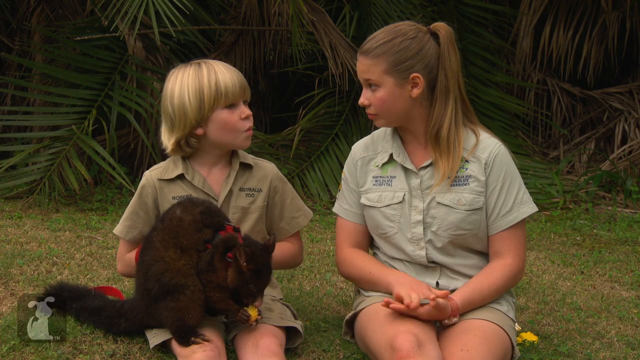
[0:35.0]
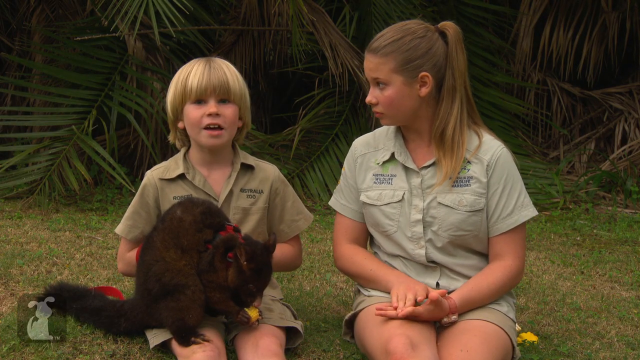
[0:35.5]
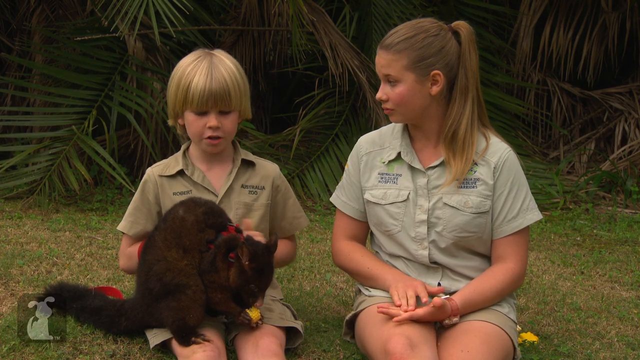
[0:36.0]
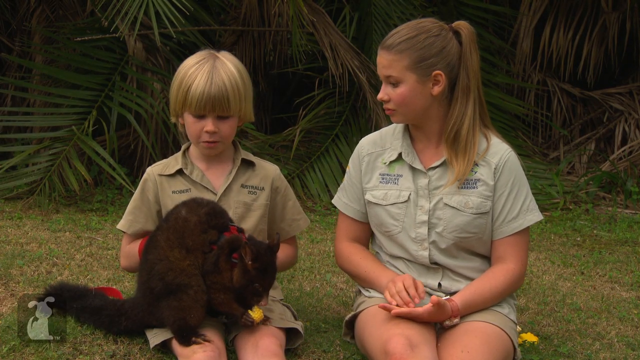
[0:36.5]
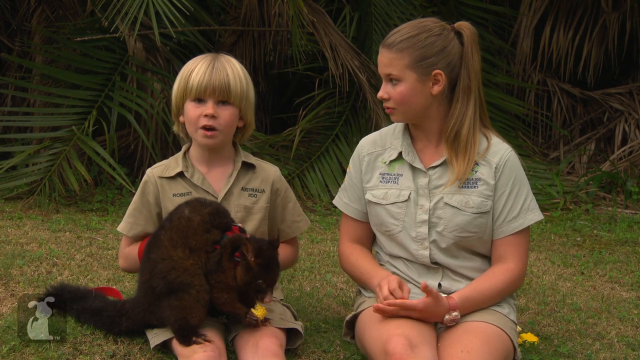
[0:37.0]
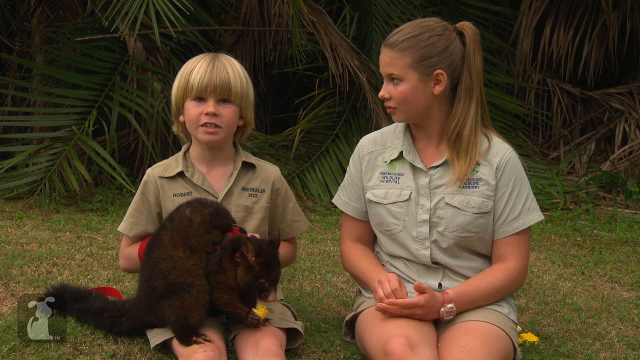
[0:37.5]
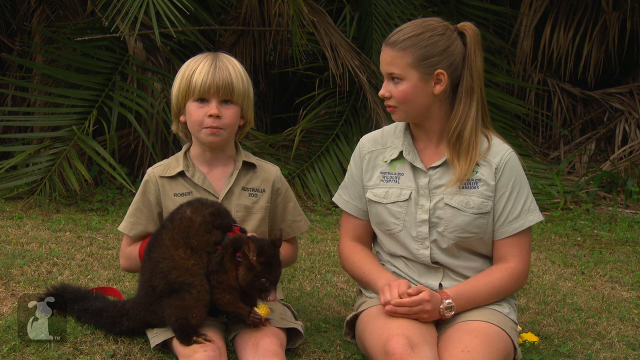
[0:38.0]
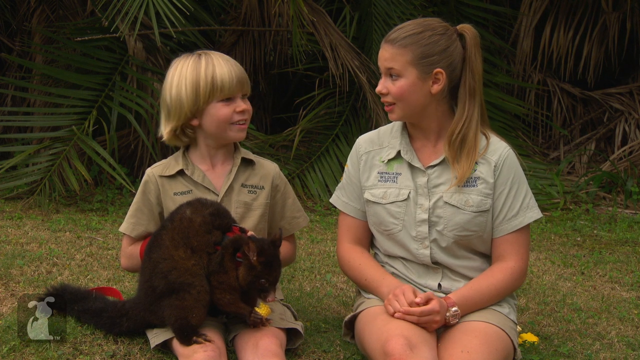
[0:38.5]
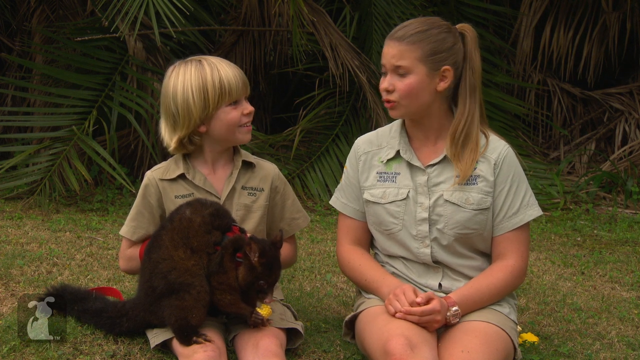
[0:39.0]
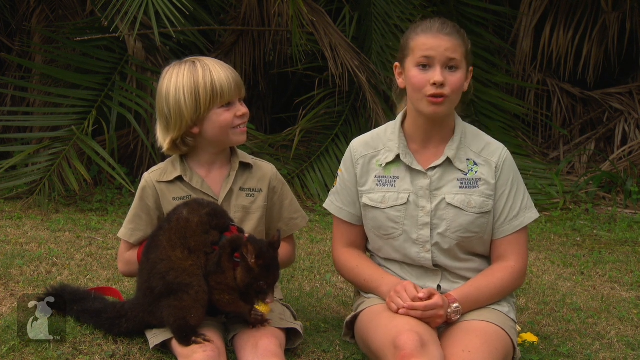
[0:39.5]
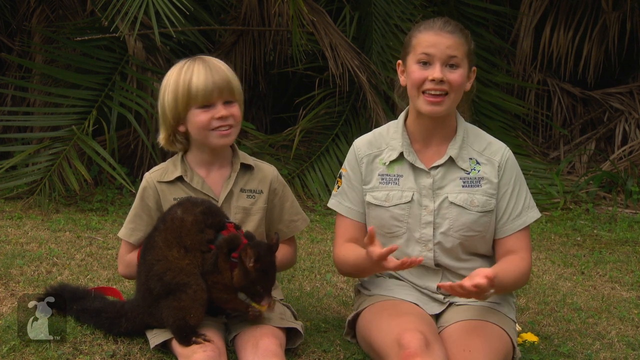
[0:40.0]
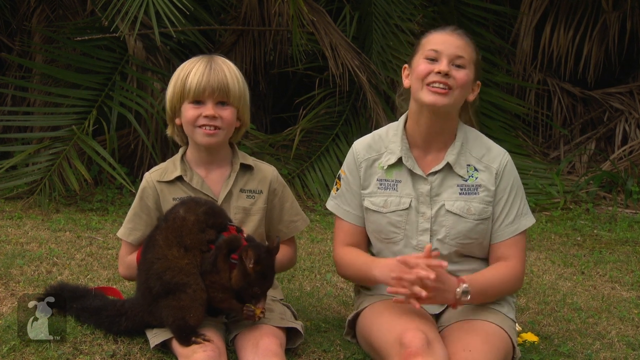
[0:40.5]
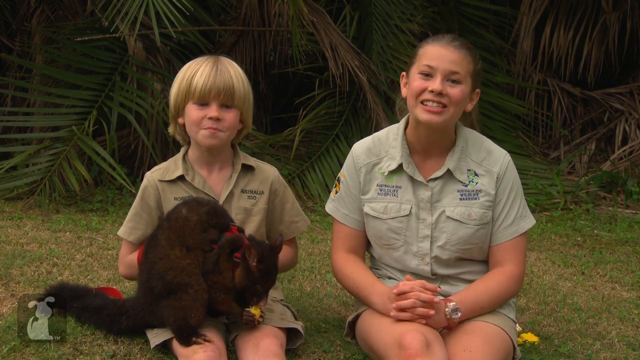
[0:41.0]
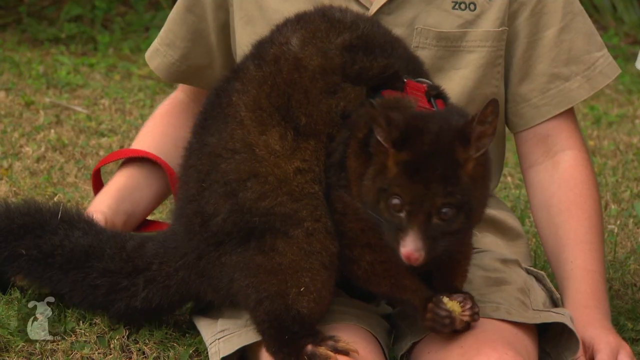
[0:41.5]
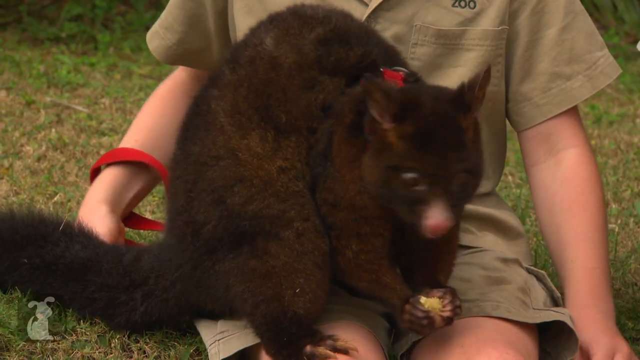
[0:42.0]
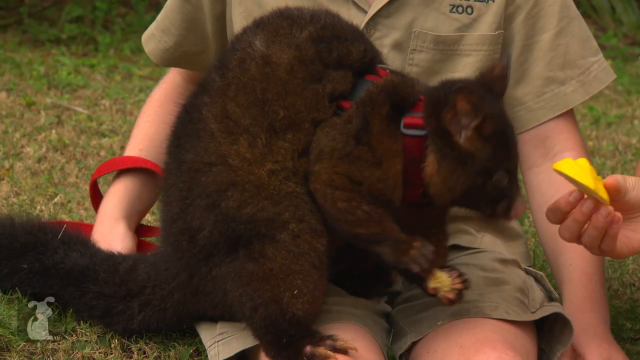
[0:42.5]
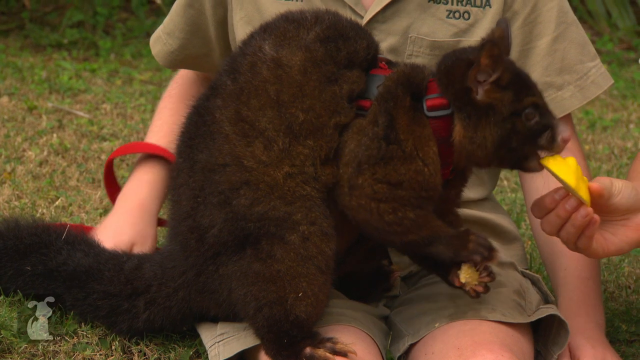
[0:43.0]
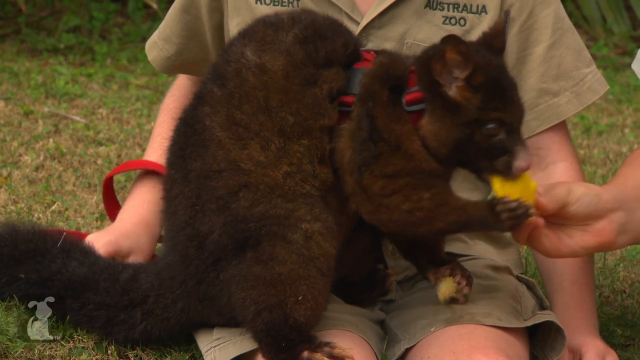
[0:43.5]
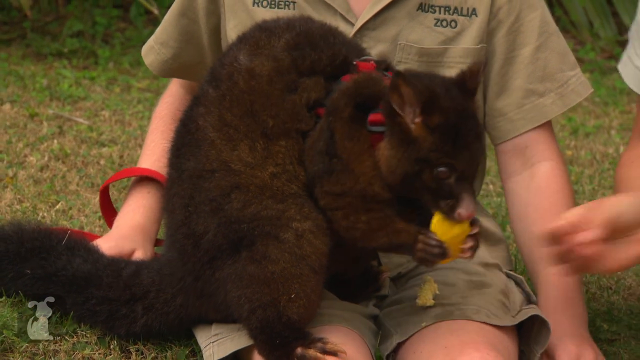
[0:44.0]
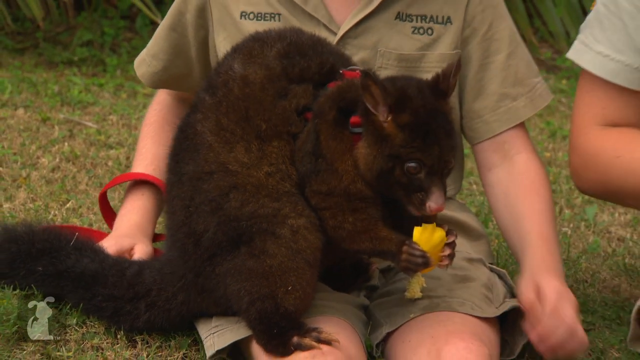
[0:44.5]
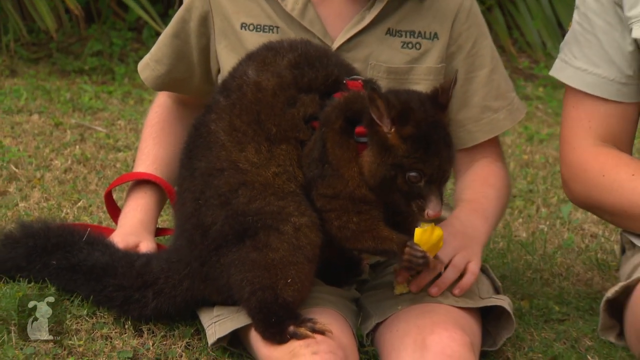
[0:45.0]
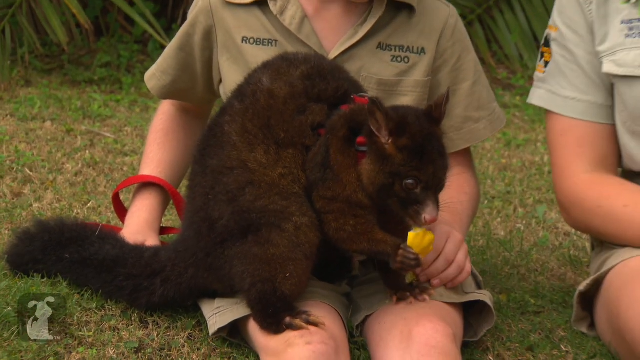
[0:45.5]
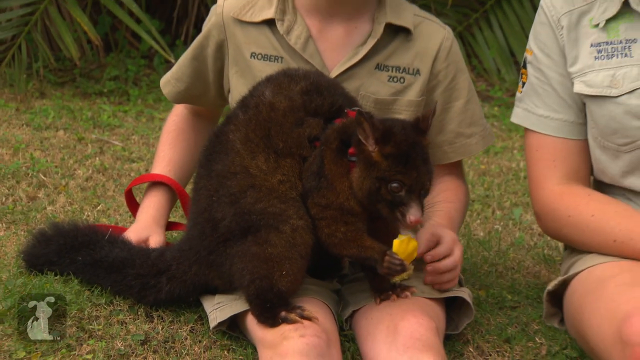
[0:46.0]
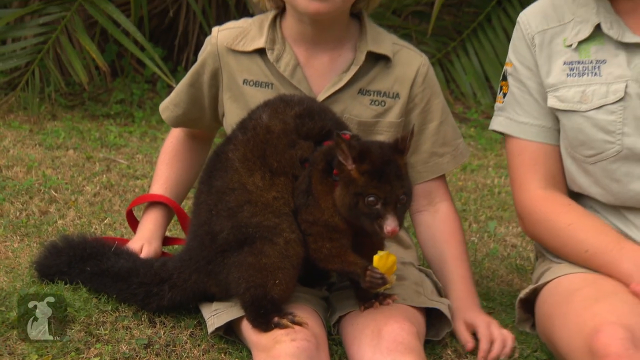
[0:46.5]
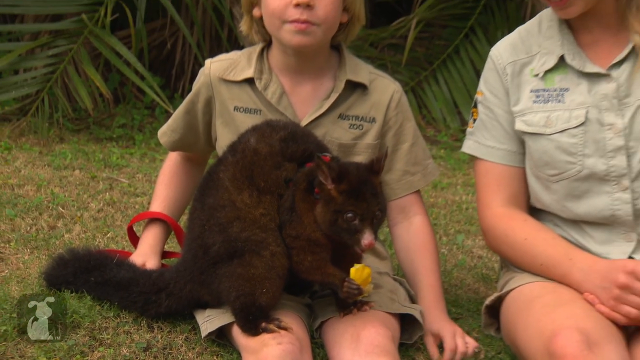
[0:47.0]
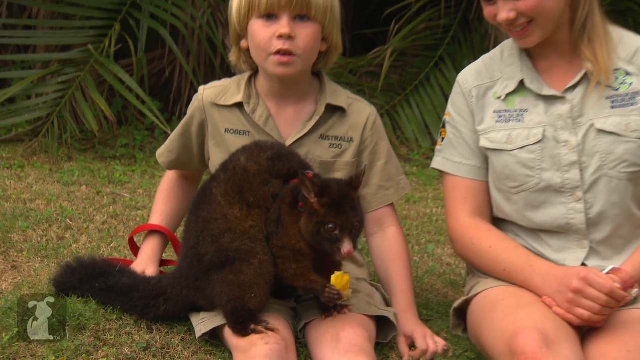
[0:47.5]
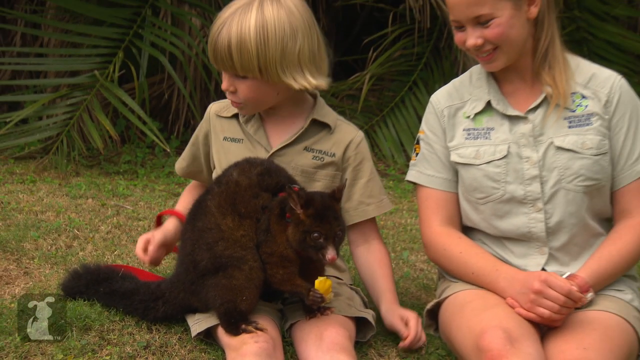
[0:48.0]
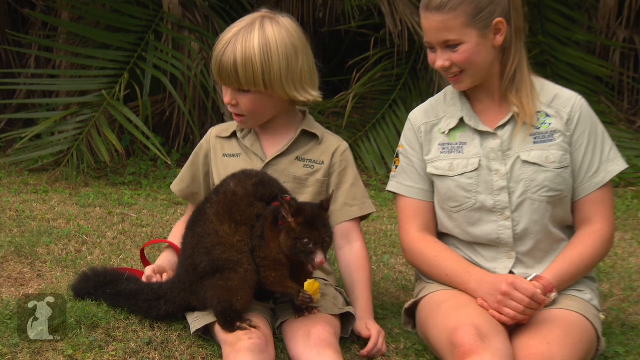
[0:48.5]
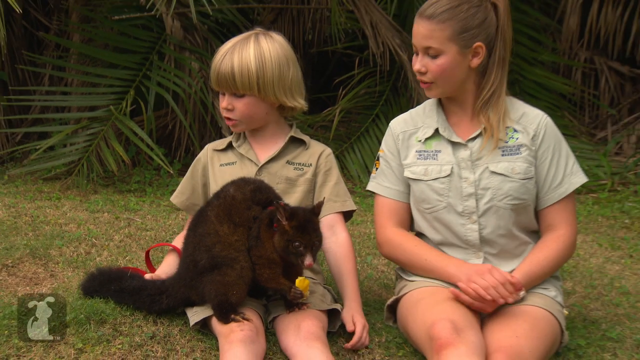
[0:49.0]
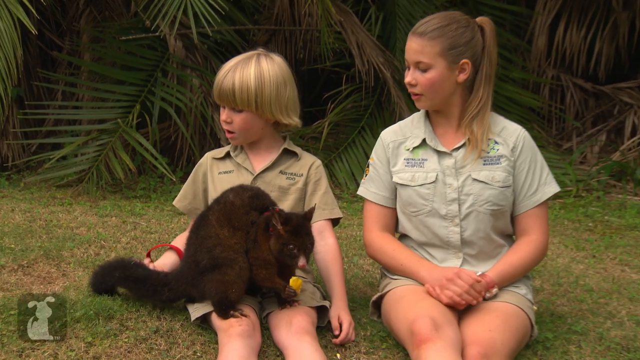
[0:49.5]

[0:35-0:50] The young boy and young girl hold the leashed possum as it eats a piece of corn. Partway through, the girl hands the possum a different piece of food; it drops what is left of the corn and begins eating the new food, which appears to be a fruit, possibly a mango. The two talk about the animal to the camera. On the left is an icon of an animal silhouette, and on the right an icon with a pink backdrop and a cat, with the text "subscribe" above the cat. It is daytime, and they sit on grass in what appears to be a tropical setting, in front of tropical bushes and trees.